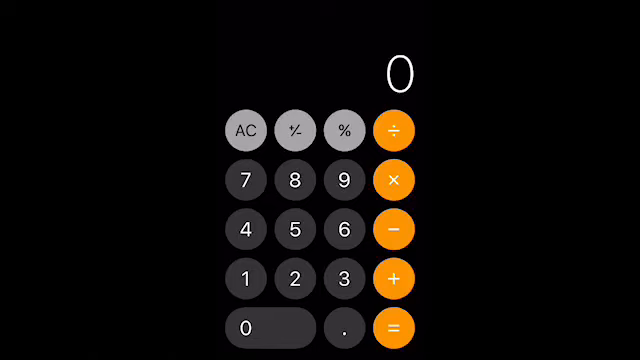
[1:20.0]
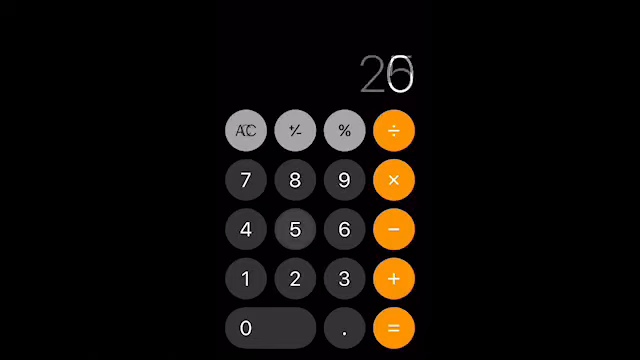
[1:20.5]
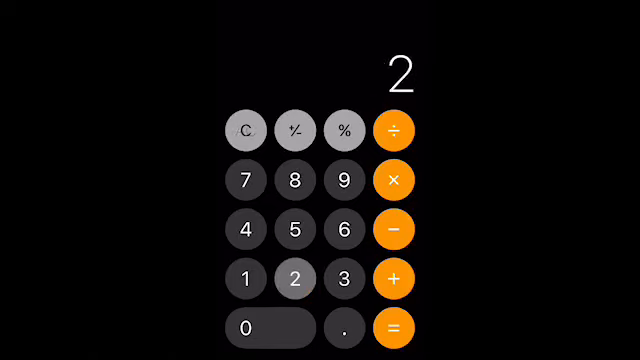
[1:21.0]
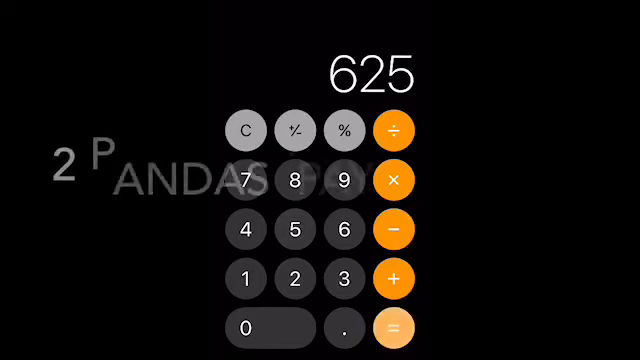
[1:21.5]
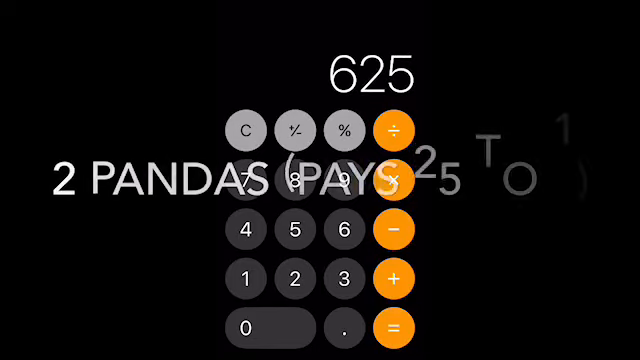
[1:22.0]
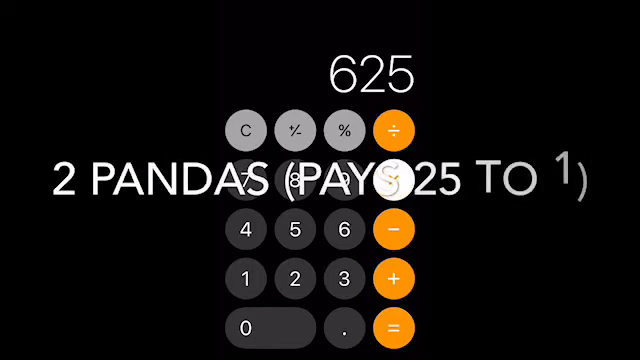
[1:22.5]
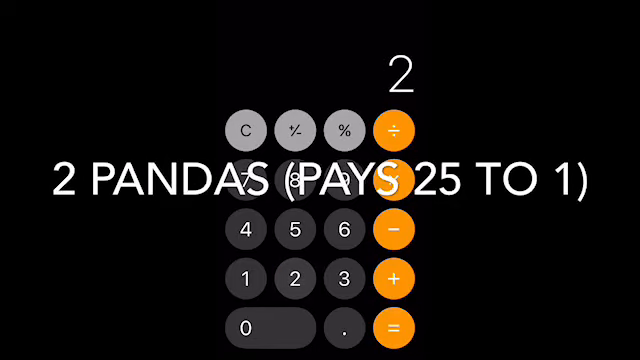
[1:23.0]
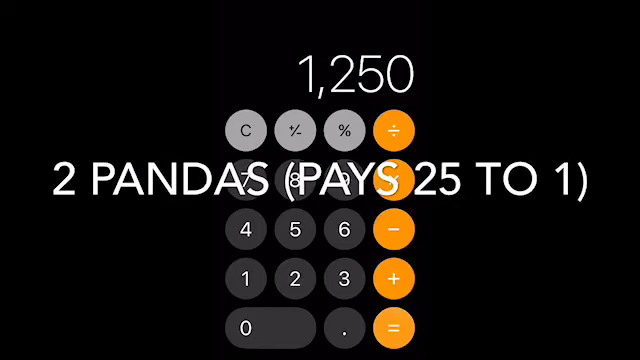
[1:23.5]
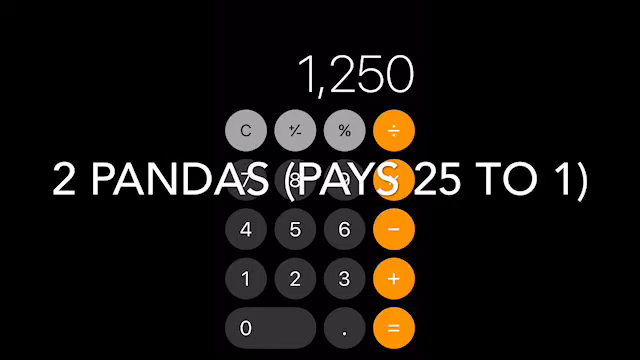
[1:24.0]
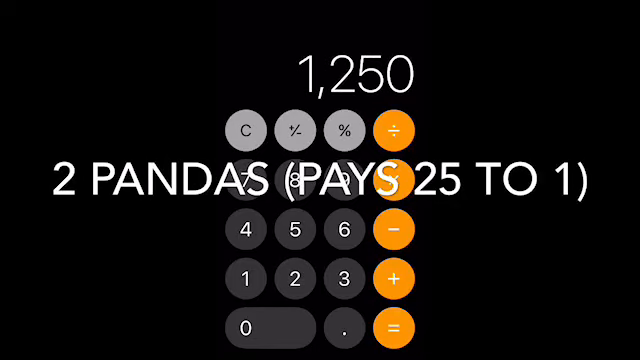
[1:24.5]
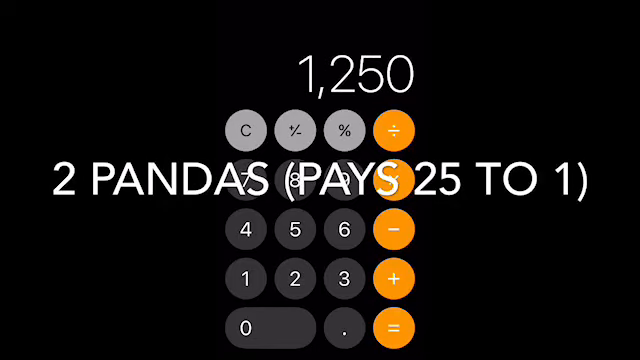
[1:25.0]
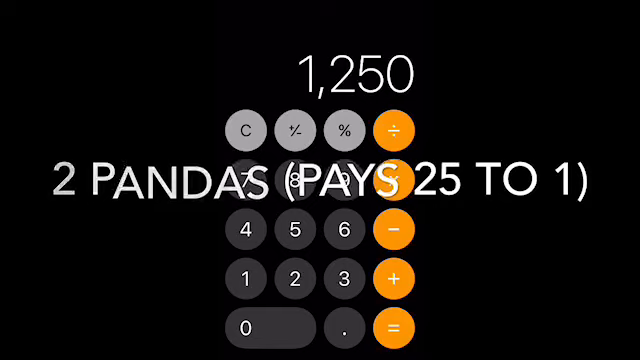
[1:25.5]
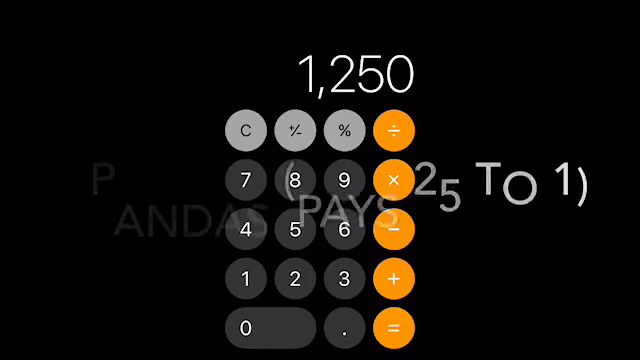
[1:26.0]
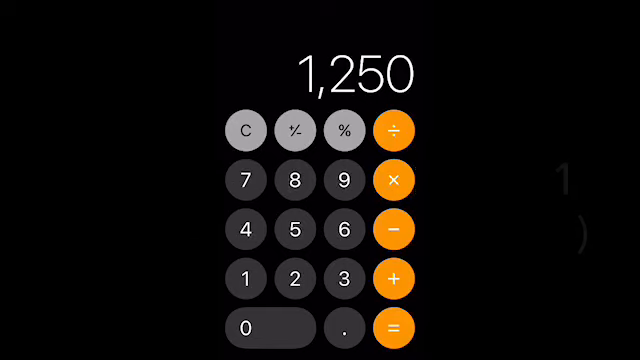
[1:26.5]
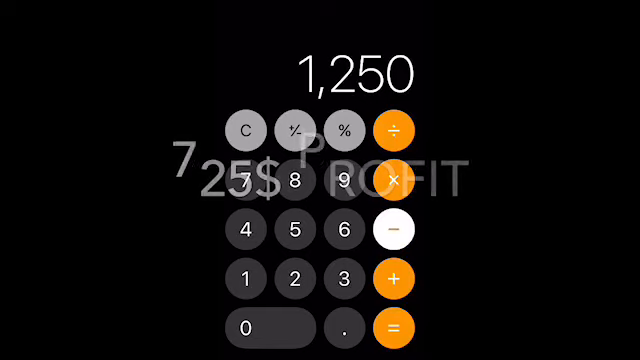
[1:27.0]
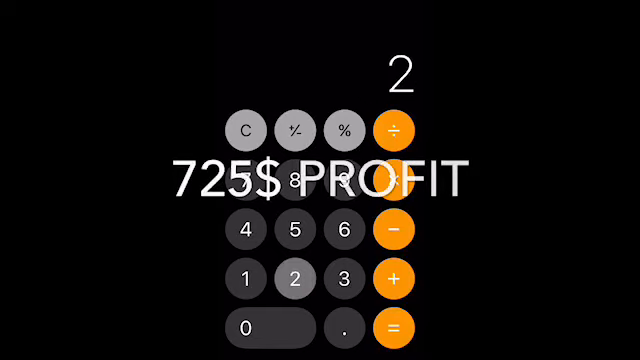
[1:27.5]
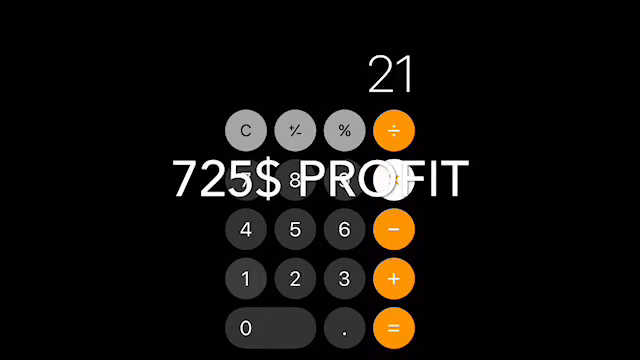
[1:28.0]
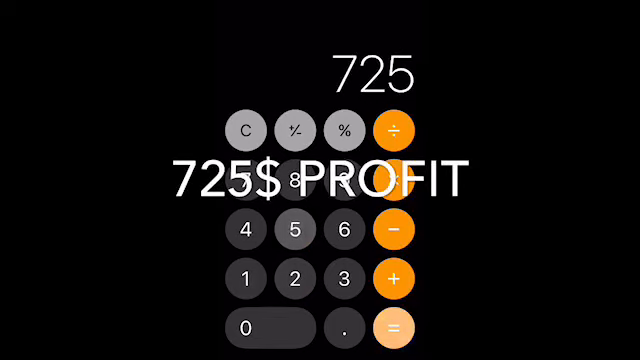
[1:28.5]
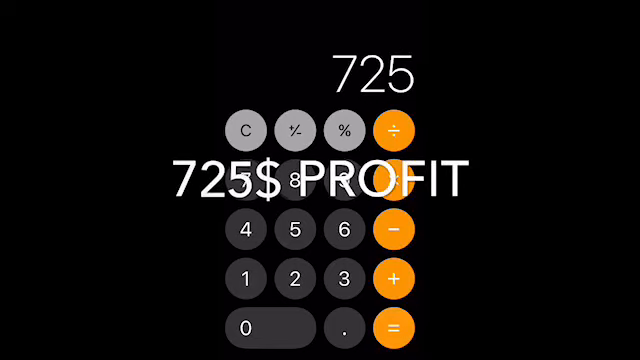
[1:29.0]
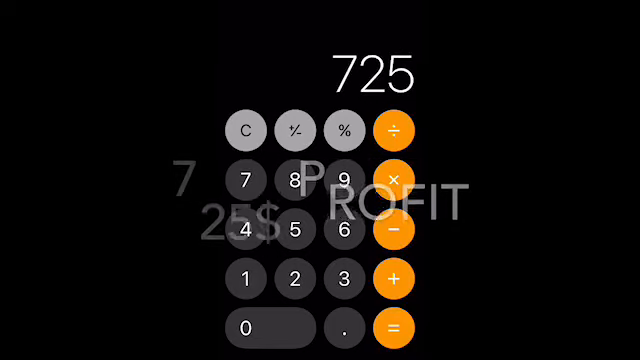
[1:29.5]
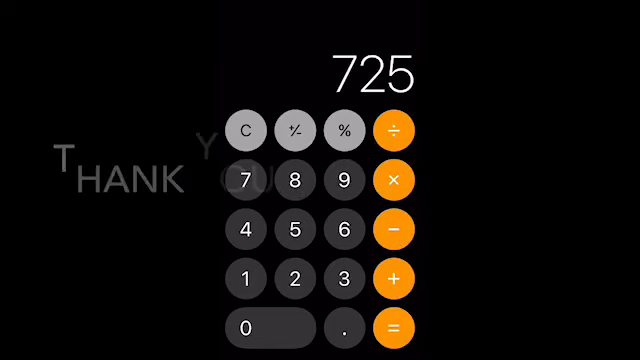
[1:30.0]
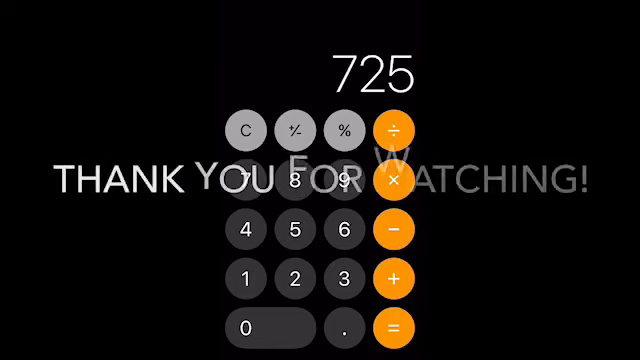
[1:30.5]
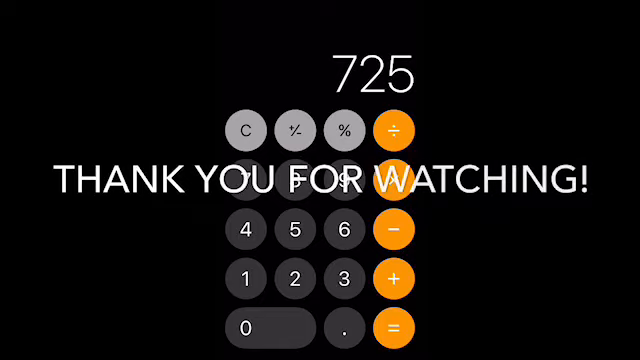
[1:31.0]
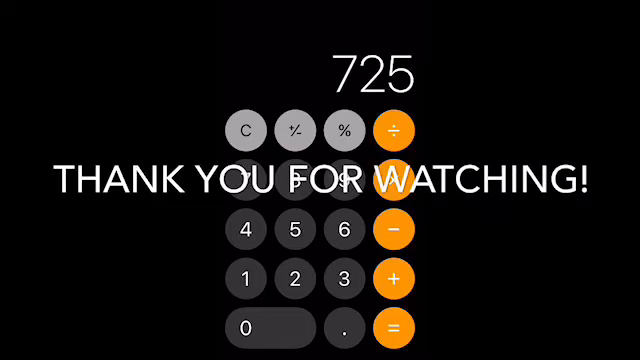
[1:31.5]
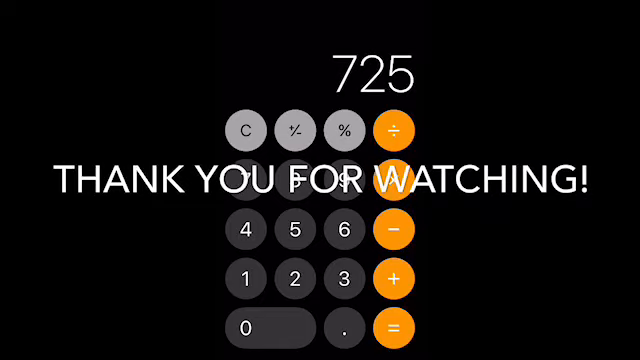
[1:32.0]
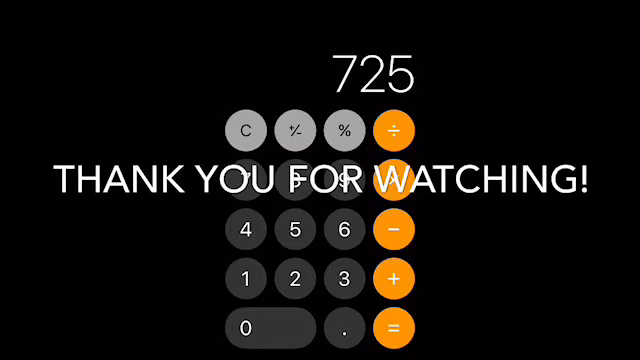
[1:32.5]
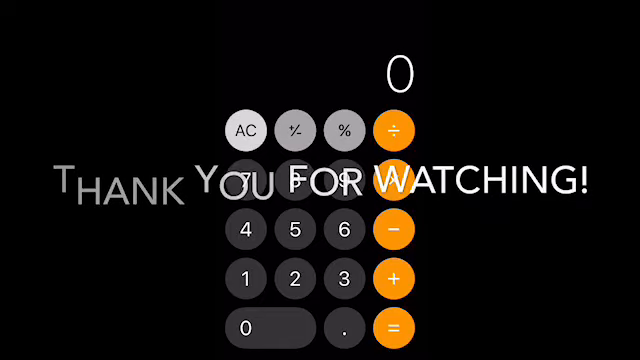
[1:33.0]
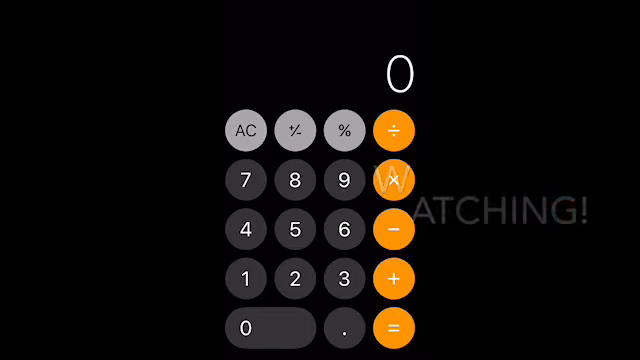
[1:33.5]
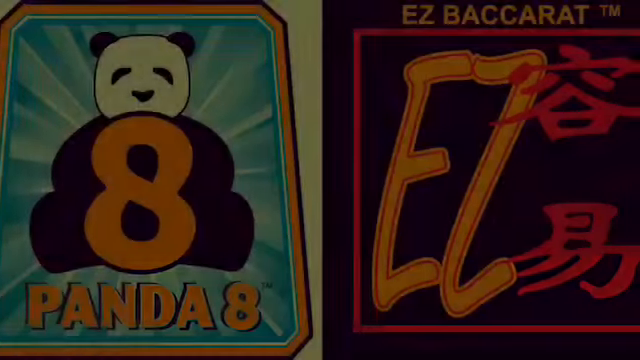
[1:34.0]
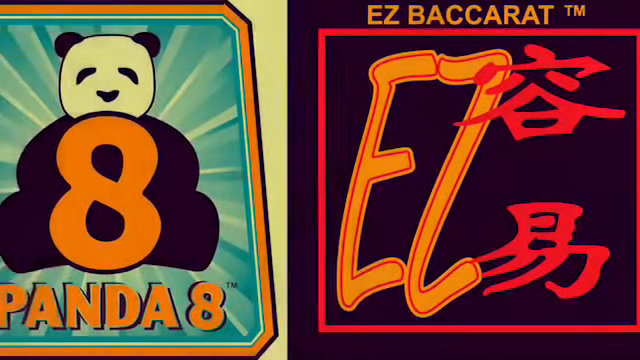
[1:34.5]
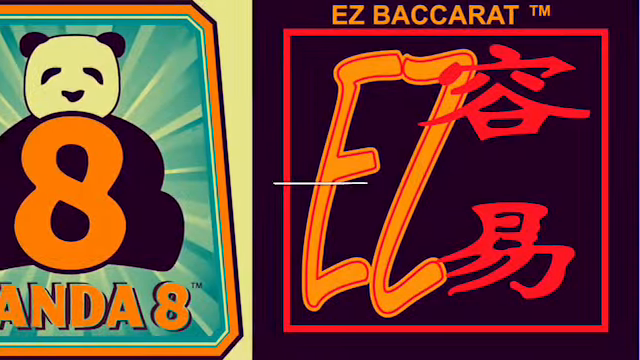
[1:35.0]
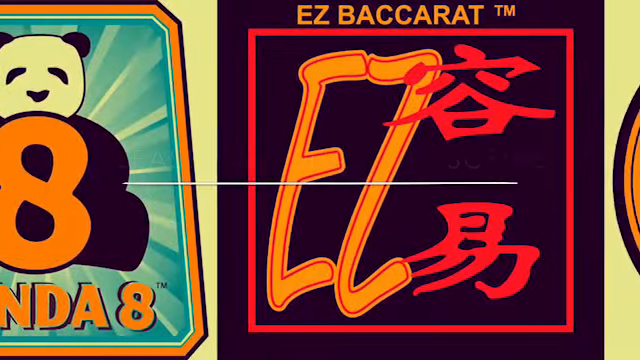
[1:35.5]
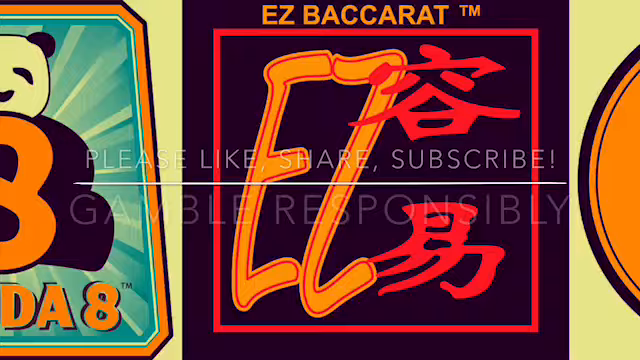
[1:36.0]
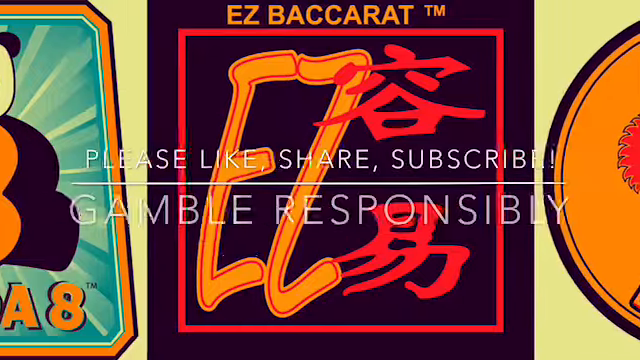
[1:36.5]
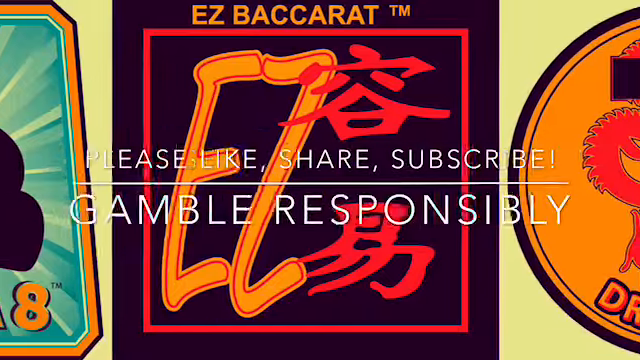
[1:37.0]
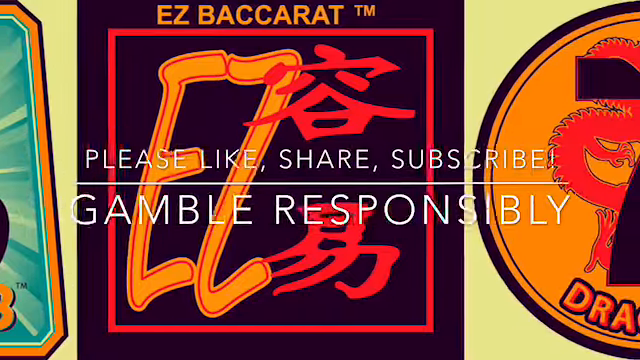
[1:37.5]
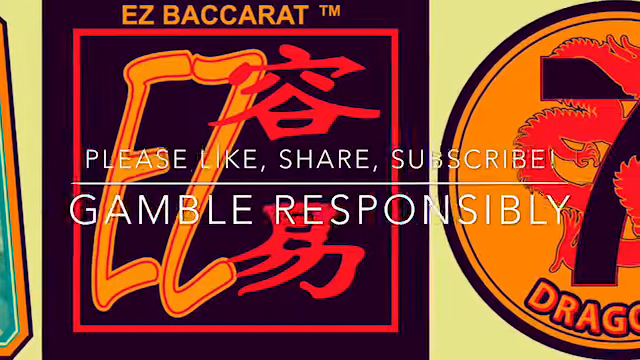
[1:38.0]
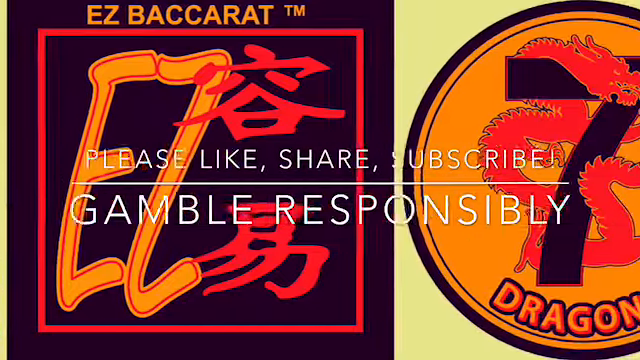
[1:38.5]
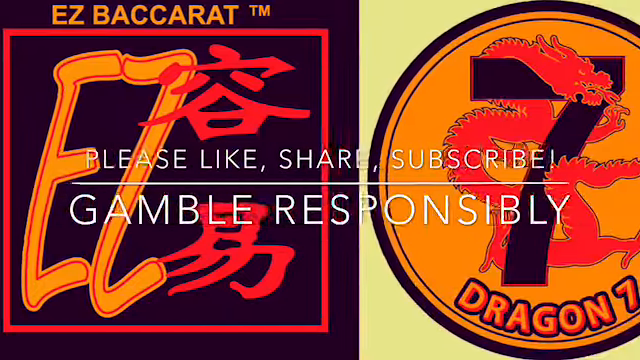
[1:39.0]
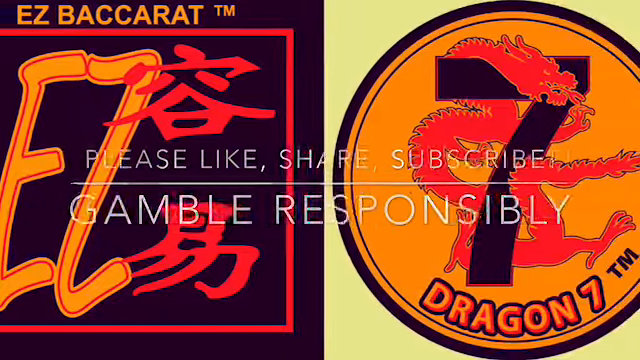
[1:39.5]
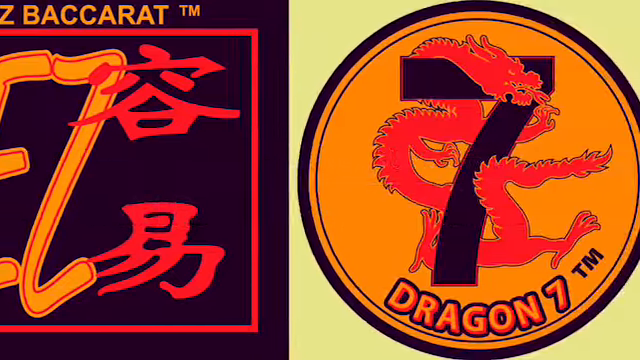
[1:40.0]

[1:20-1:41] The next hand of baccarat is played with a bet on the banker, nines come up, and stacks of chips are visible.